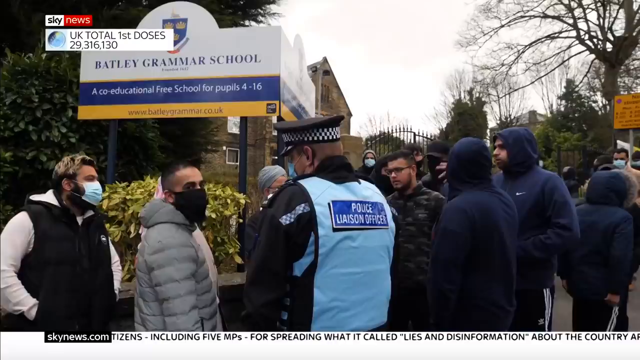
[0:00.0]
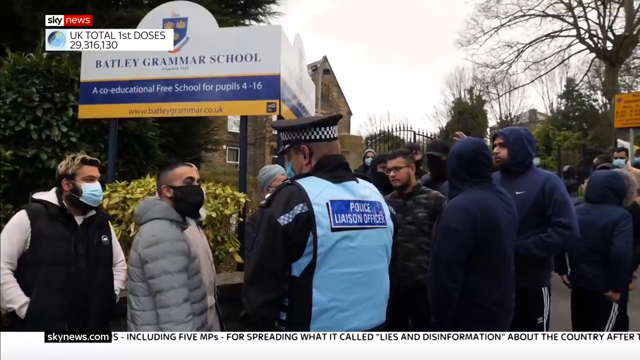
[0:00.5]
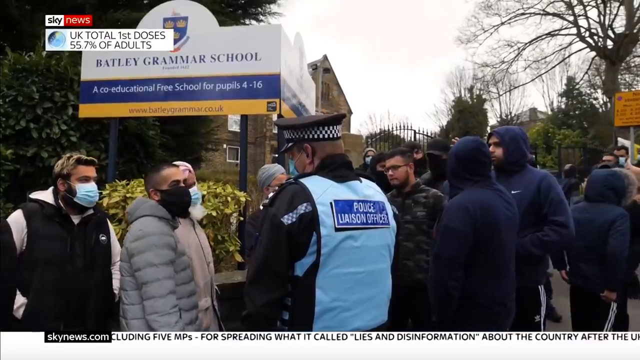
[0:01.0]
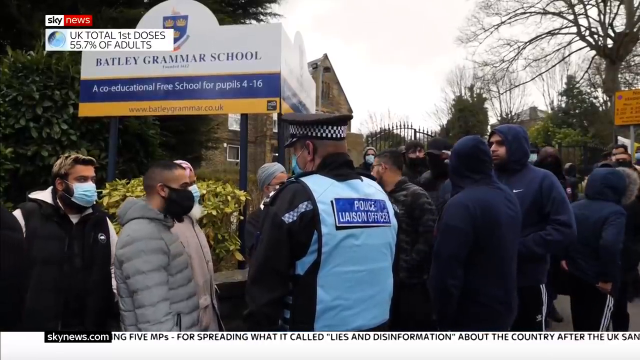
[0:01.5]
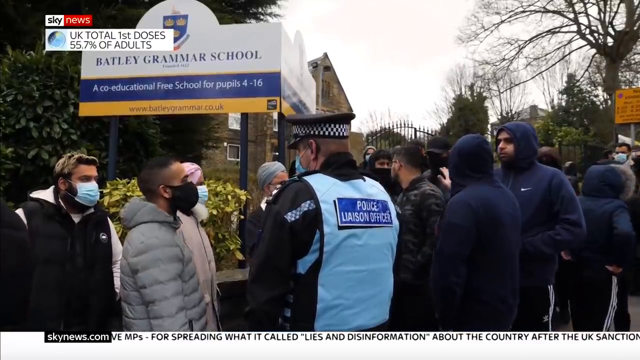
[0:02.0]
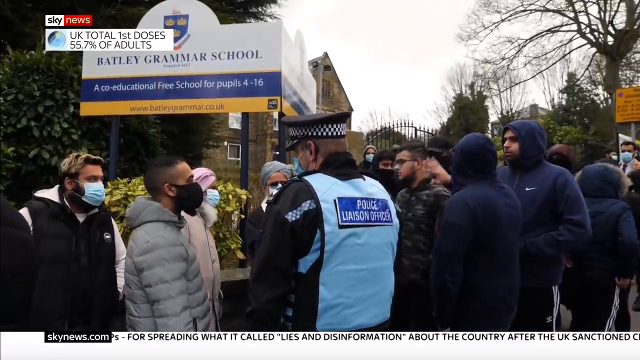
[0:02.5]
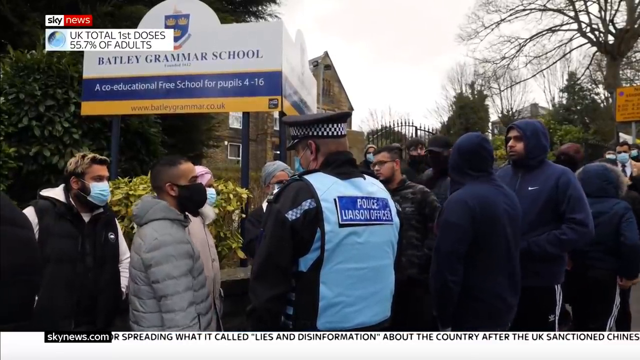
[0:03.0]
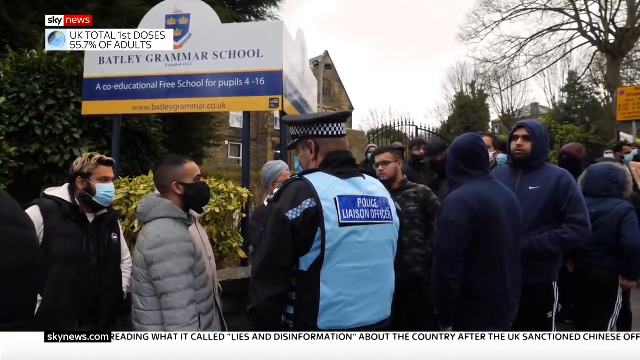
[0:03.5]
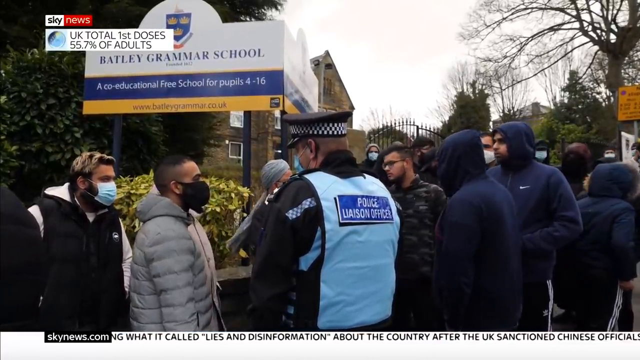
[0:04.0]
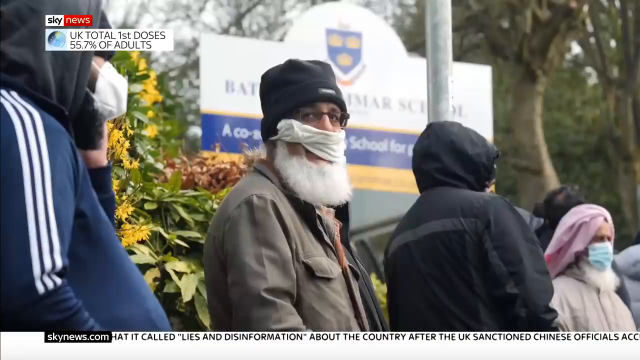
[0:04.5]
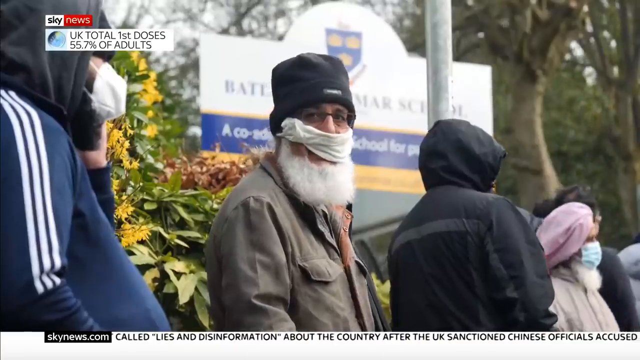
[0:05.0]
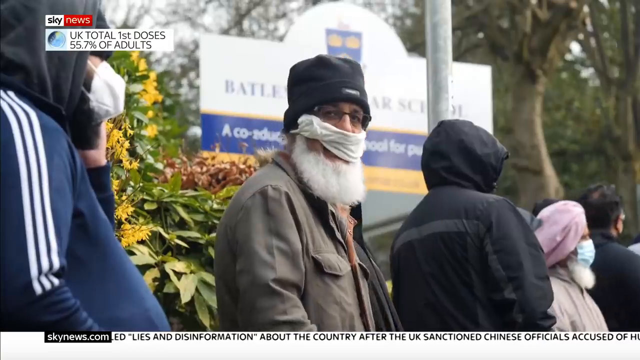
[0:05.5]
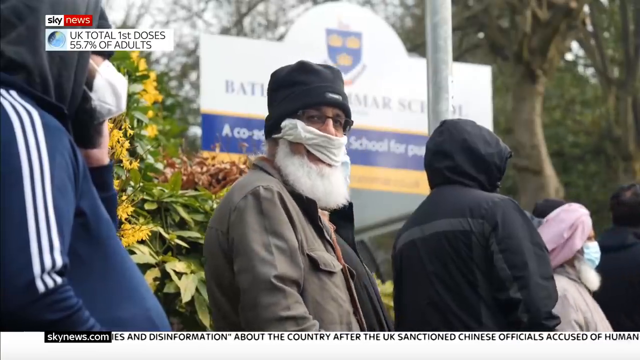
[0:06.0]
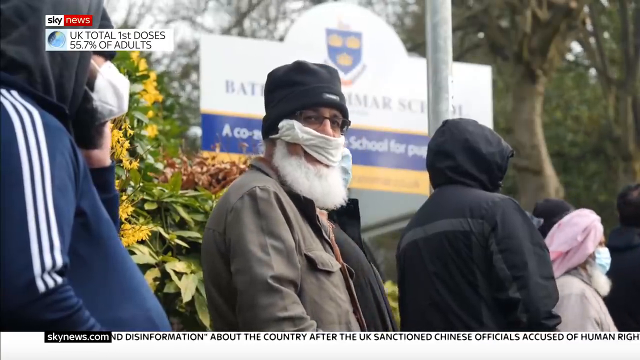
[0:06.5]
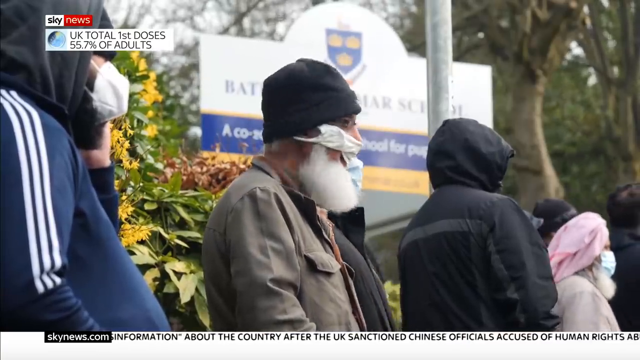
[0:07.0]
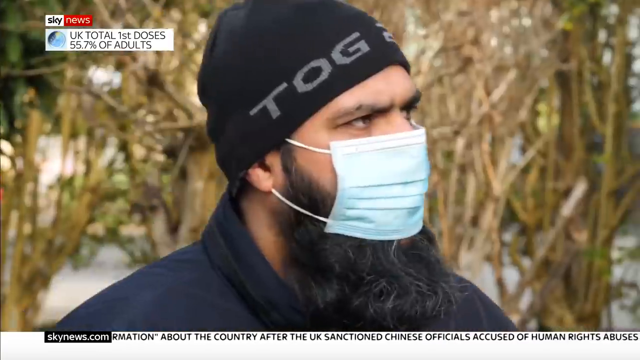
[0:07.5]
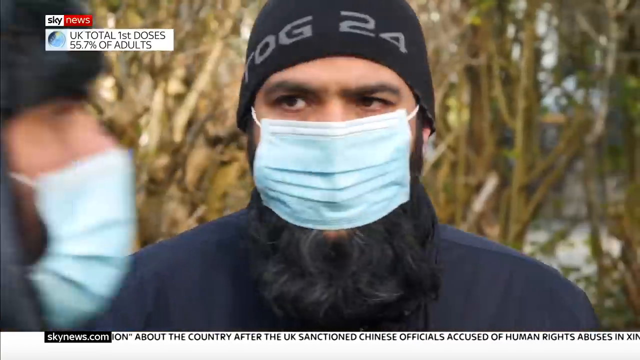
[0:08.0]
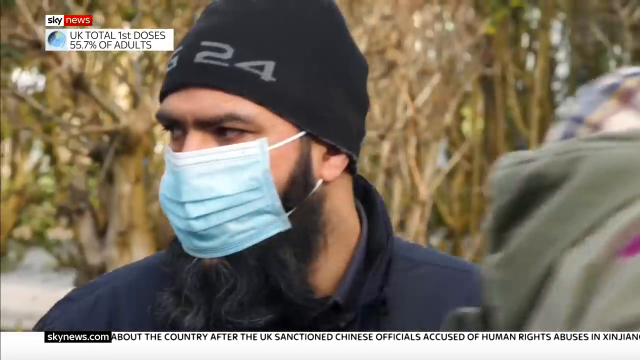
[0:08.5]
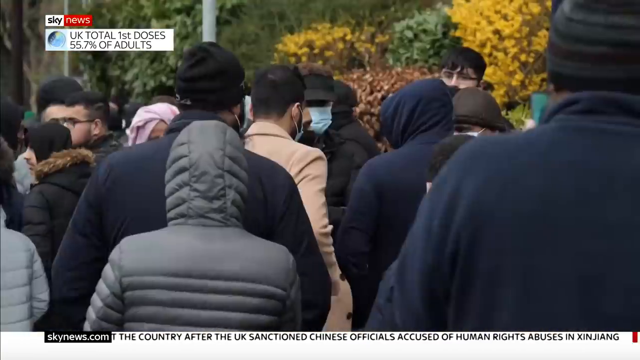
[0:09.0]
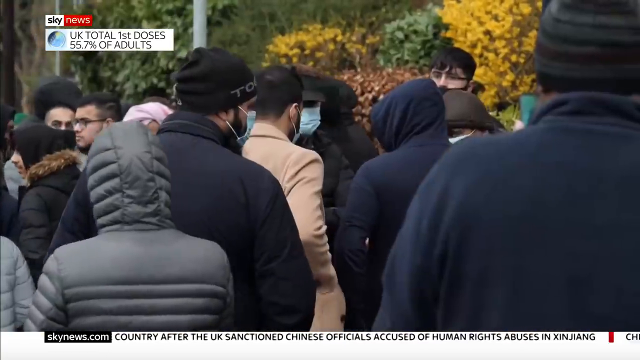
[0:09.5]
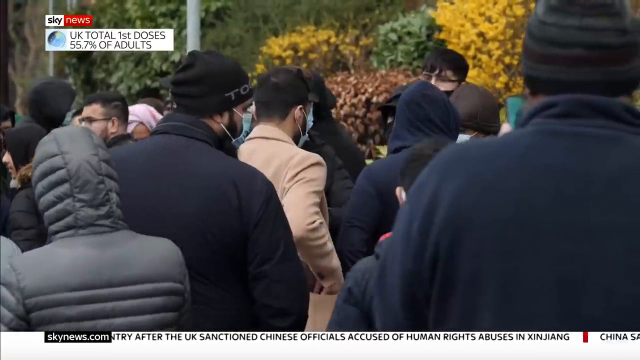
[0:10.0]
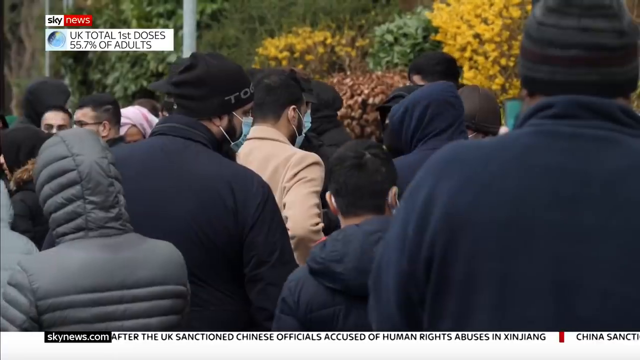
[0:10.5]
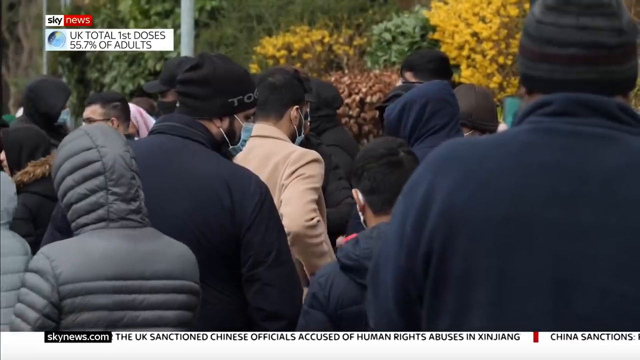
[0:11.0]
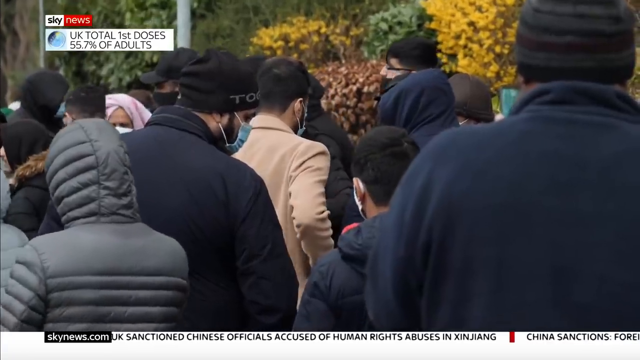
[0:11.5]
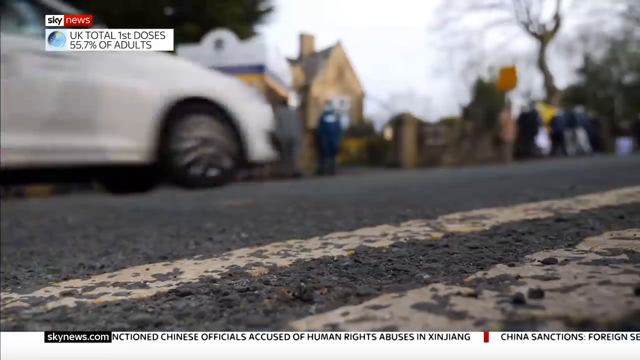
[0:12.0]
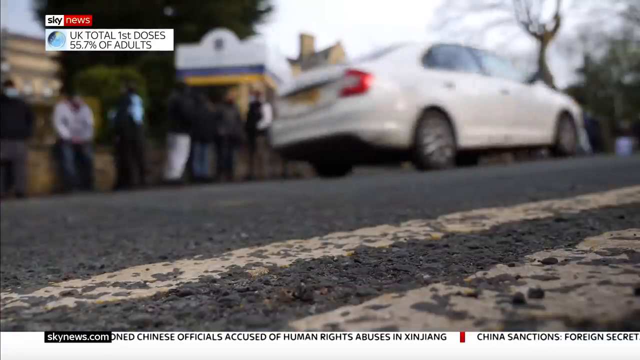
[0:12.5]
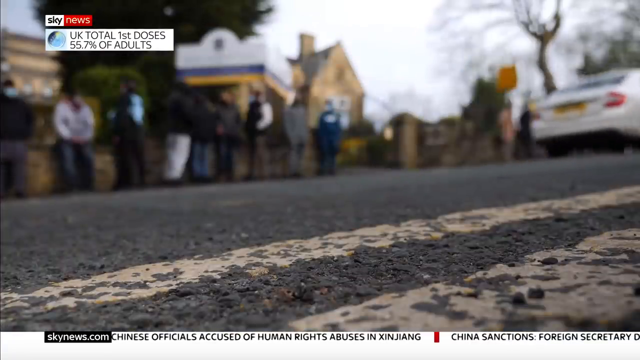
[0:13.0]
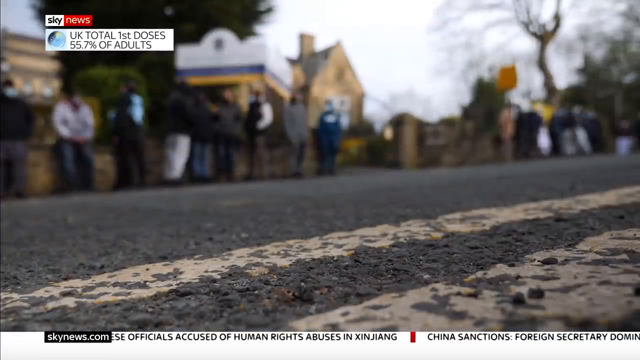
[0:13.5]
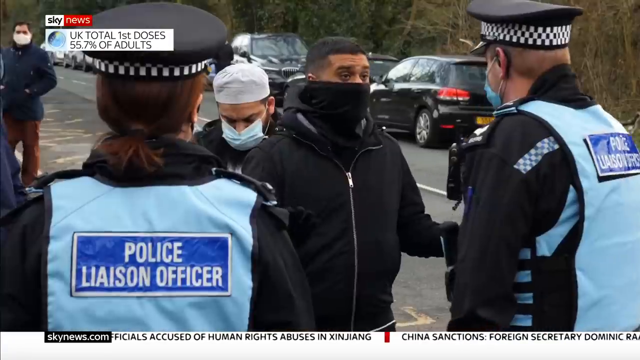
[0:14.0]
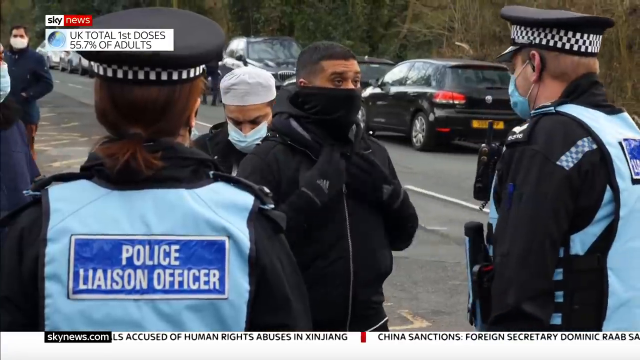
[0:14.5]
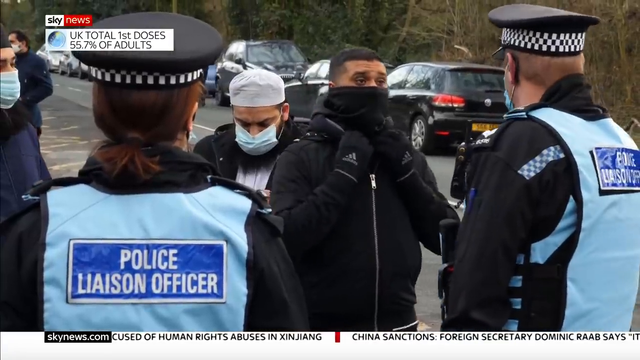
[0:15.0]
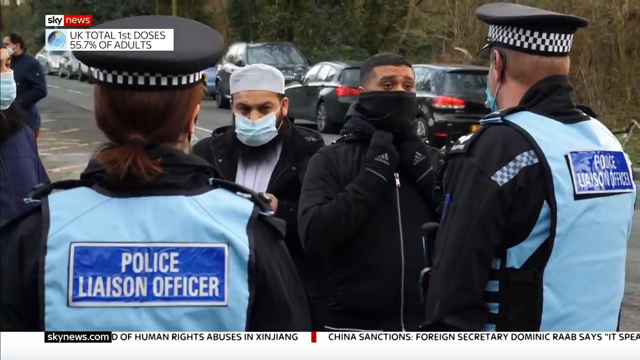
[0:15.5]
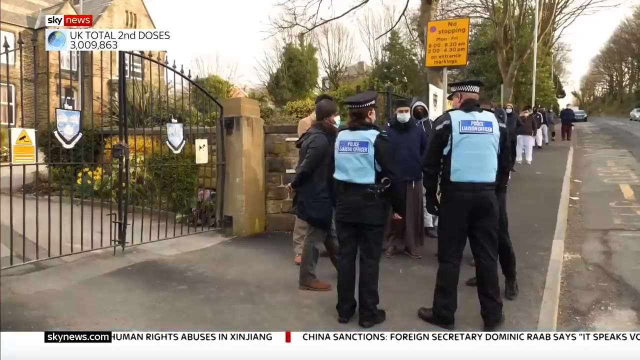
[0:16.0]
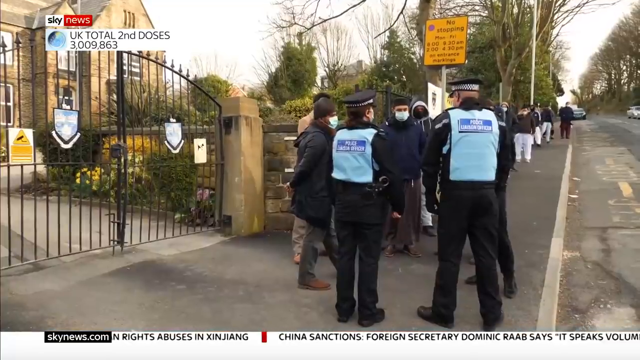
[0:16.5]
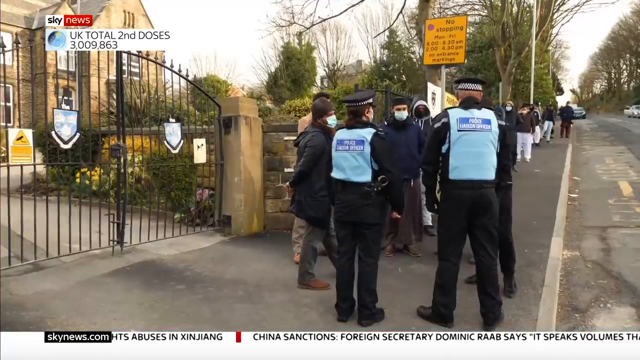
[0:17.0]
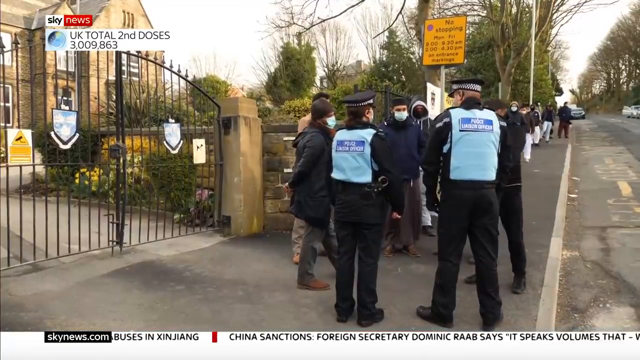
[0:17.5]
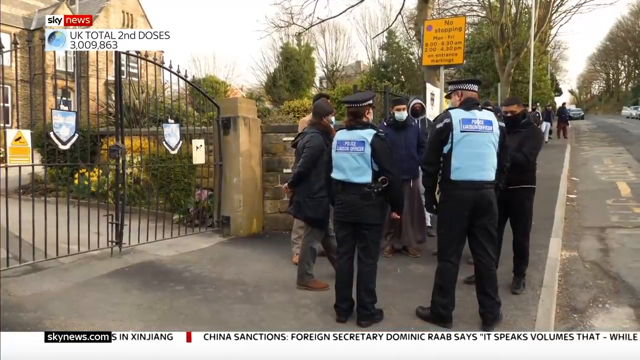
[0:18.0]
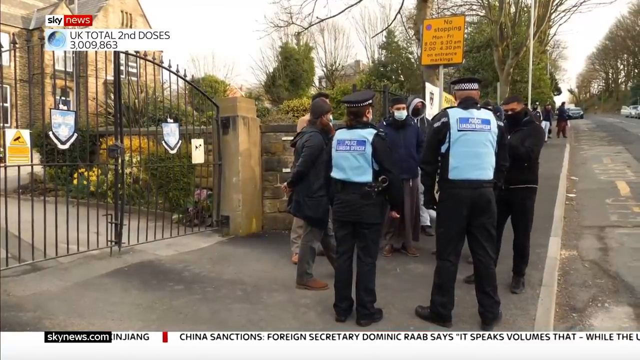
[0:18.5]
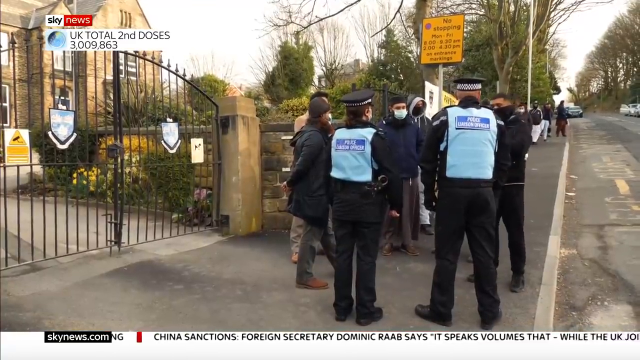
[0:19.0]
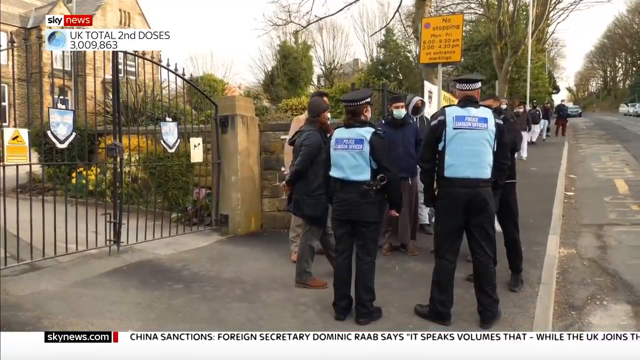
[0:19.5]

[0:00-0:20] A Sky News broadcast shows "UK first doses 29,016,130" in the top left. A banner reads "Bartley Grammar School, a co-education free school for pupils 4 to 16". A police officer and a crowd of people appear; some wear masks and others do not, with some masks blue and others black. Everyone wears a jacket or heavy clothing, so it seems to be cold. In the background are trees, flowers, the gate and an ancient-looking building. A police officer takes notes. People stand in a line wearing masks, while others cover themselves with their clothes and wear heavy clothing. The school banner is still visible, along with a poster, and other people with beards wear masks. There are many children and adults. One person consults a police officer. Two police officers, a woman and a man, appear in police uniforms with masks, beside a queue.